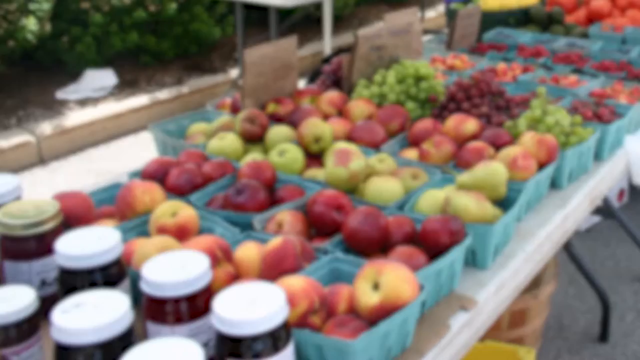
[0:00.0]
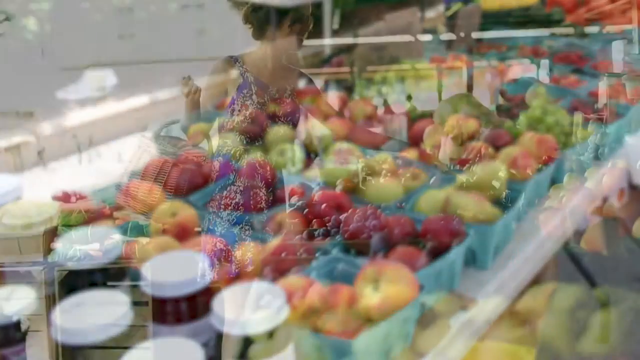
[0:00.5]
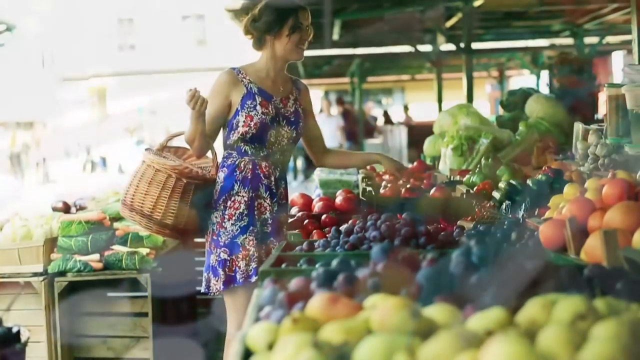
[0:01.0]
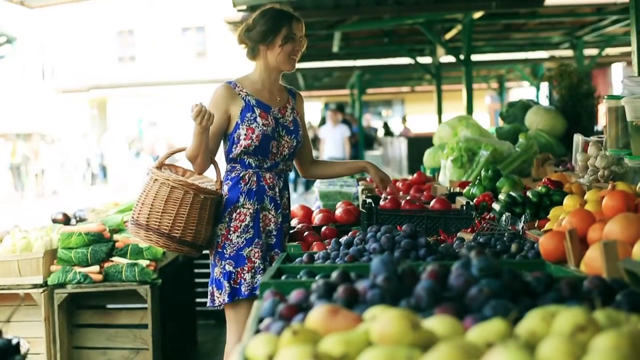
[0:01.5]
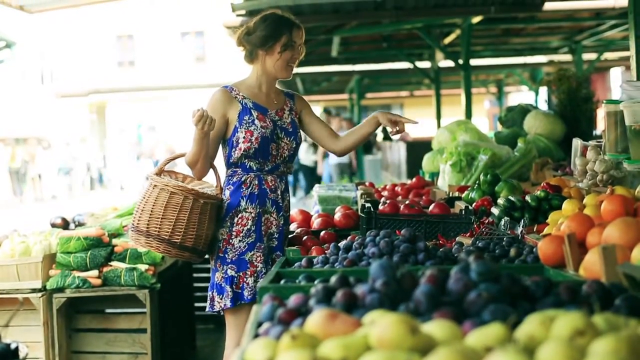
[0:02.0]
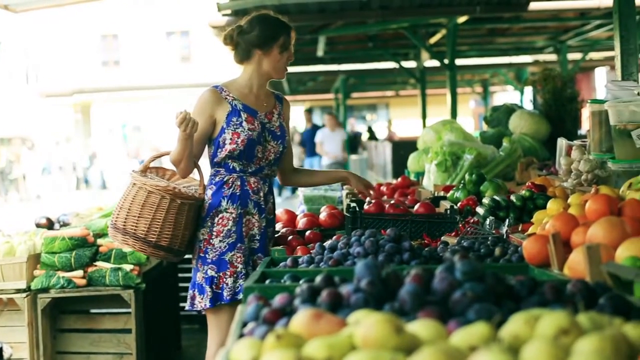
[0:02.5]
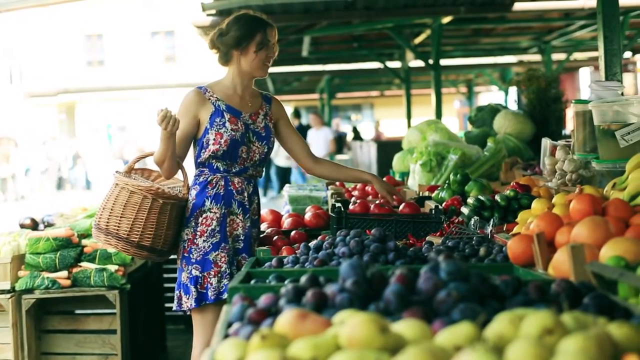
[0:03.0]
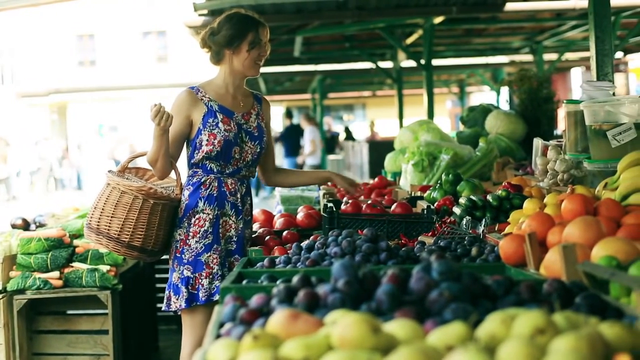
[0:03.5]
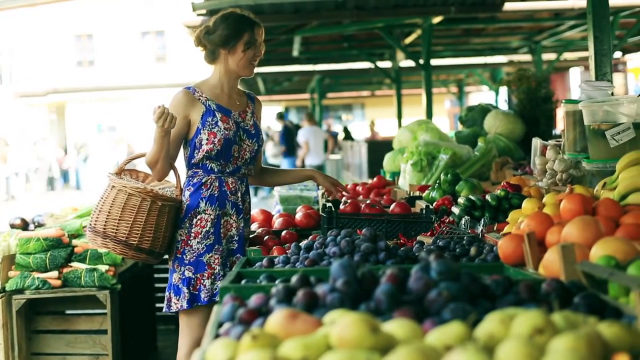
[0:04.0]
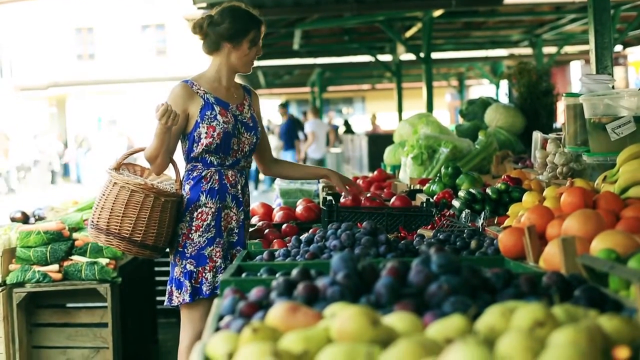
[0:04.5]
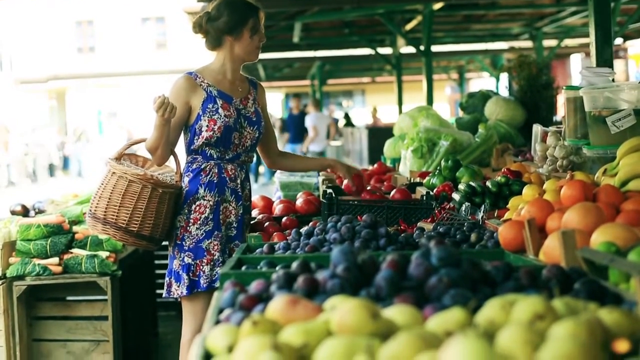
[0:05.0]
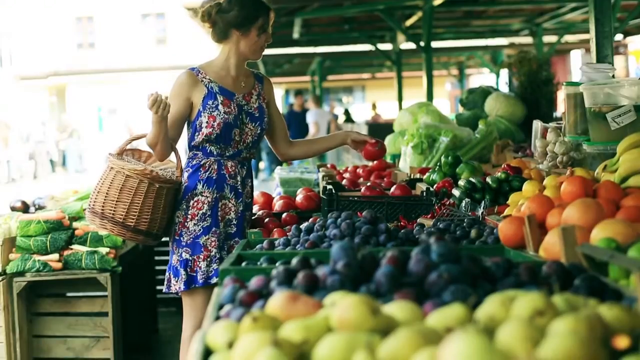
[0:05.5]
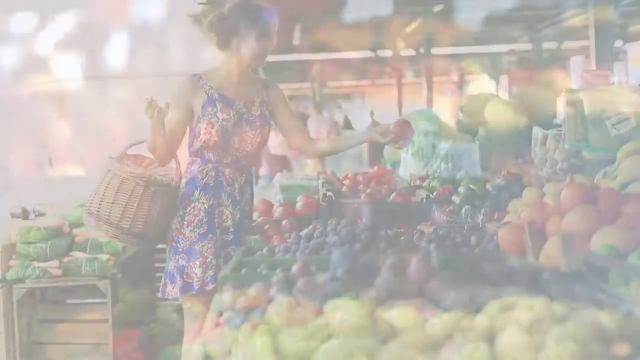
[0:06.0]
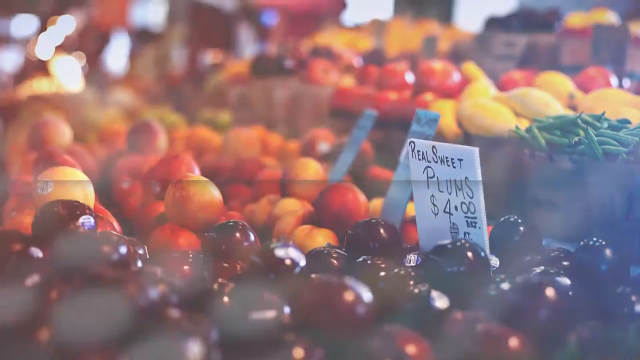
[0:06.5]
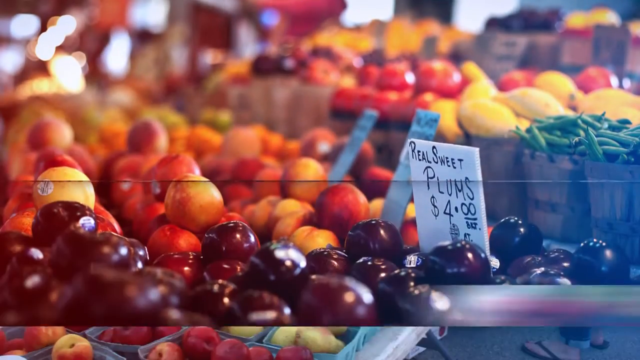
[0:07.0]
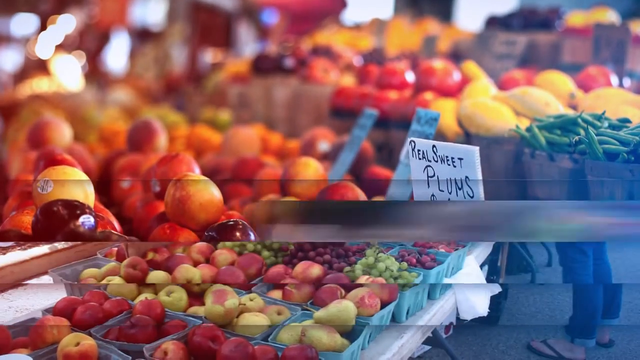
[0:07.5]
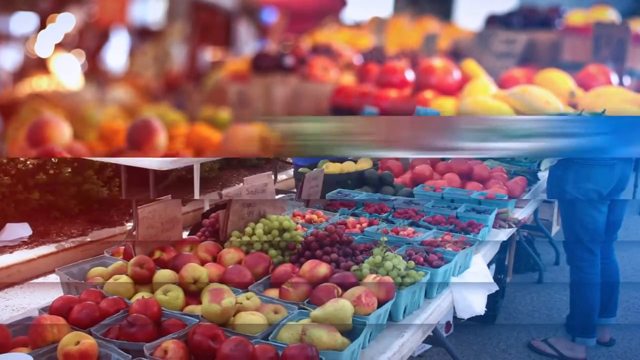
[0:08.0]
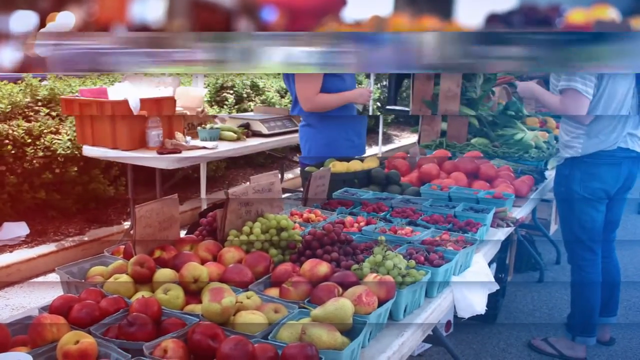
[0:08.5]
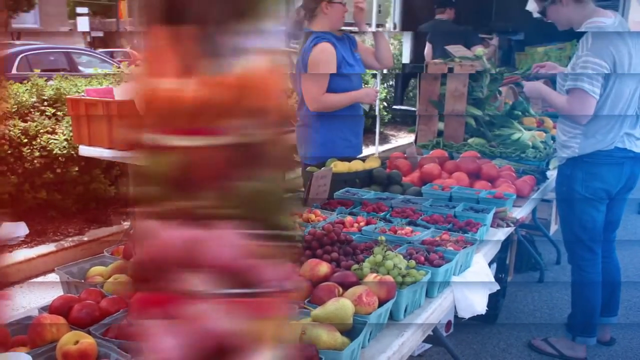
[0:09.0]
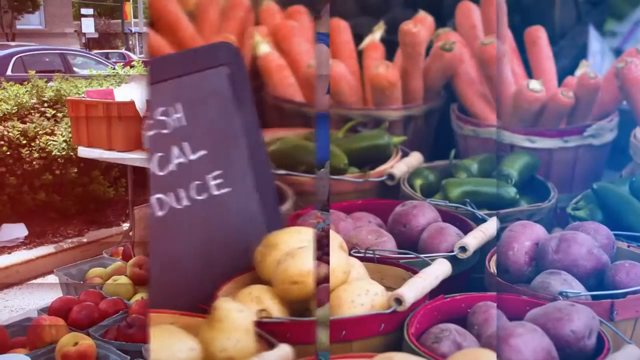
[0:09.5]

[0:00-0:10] In what looks like a market, a lady wearing a red floral dress with a basket in her hand chooses and picks fruits, pointing while talking to the vendor. The scene changes to a shot introducing what they are doing there. Many other people are there doing their purchasing and moving around. The setting is under a shade, with apples, cabbages, lettuce, blueberries, what look like mangoes, bananas and cucumbers. There are also jars with writing that is not clear. A sign reads "real sweet plums, $4 each".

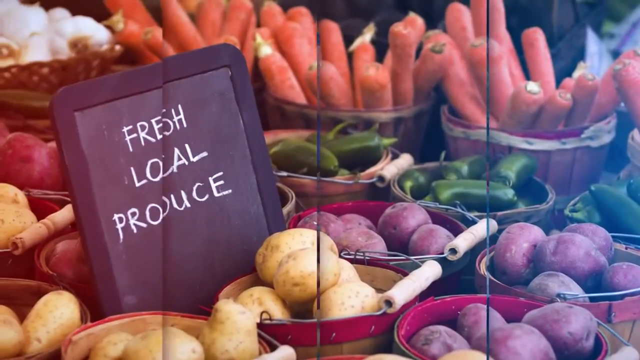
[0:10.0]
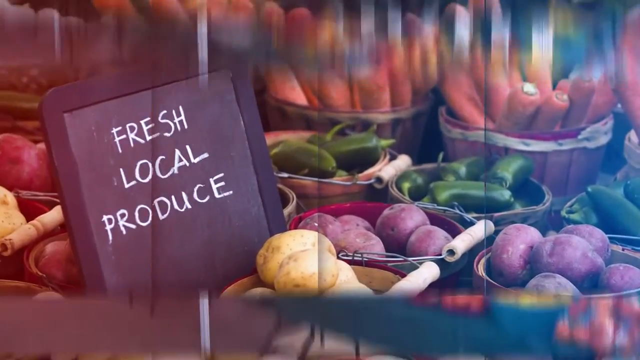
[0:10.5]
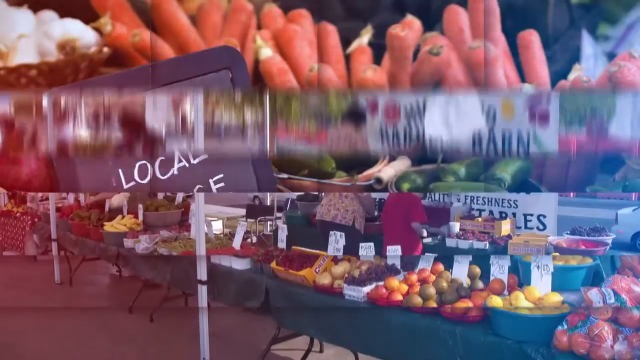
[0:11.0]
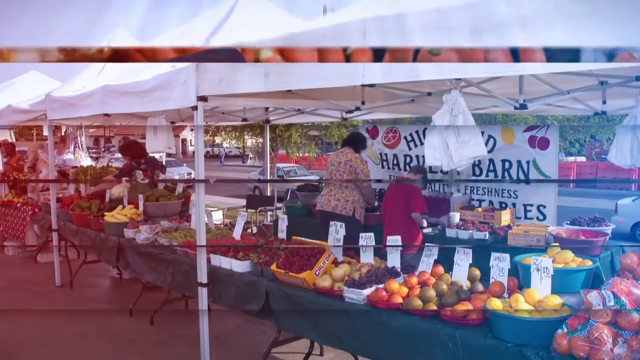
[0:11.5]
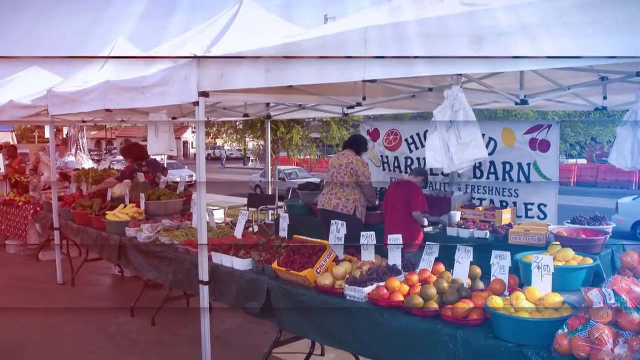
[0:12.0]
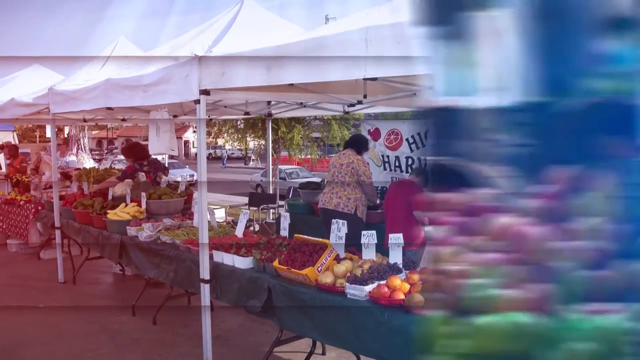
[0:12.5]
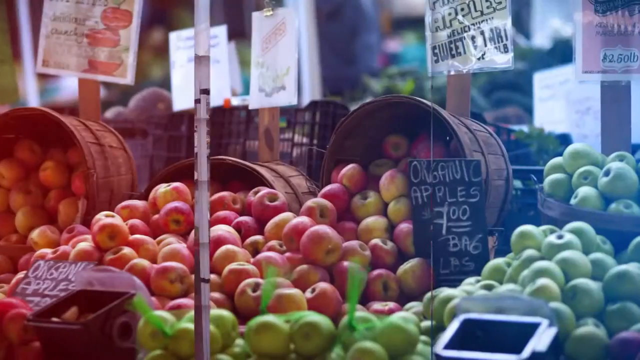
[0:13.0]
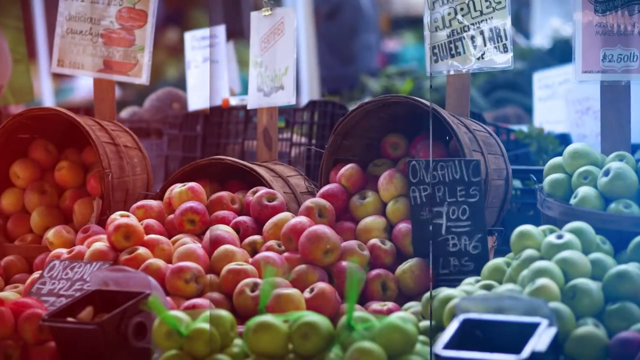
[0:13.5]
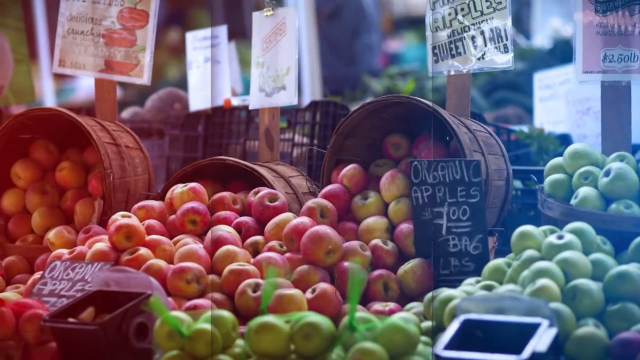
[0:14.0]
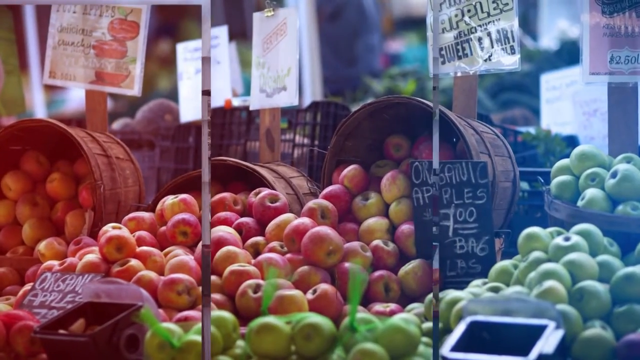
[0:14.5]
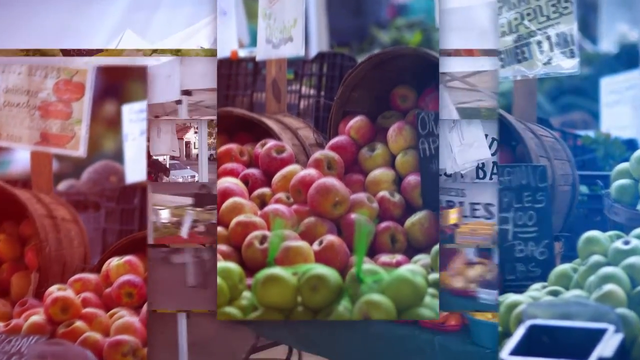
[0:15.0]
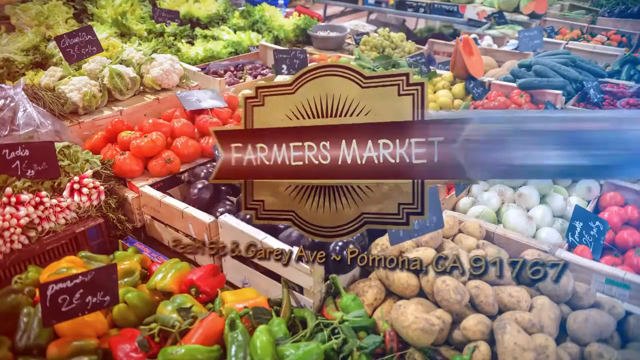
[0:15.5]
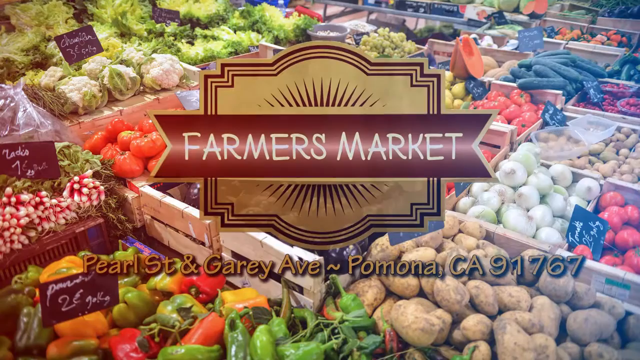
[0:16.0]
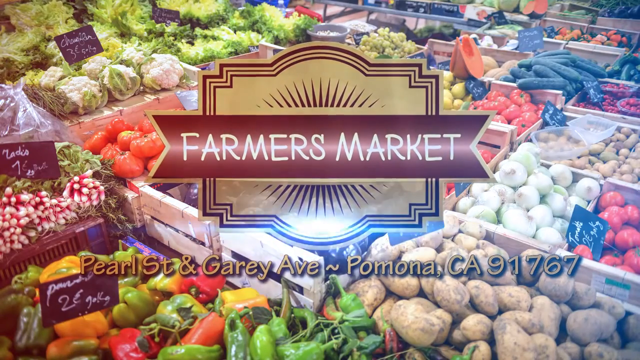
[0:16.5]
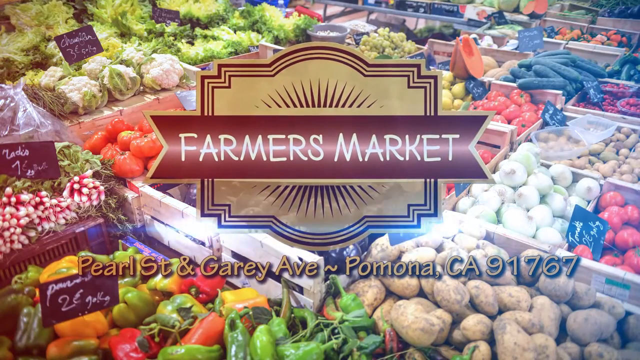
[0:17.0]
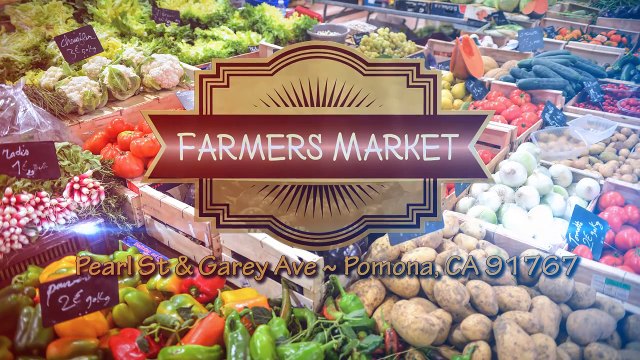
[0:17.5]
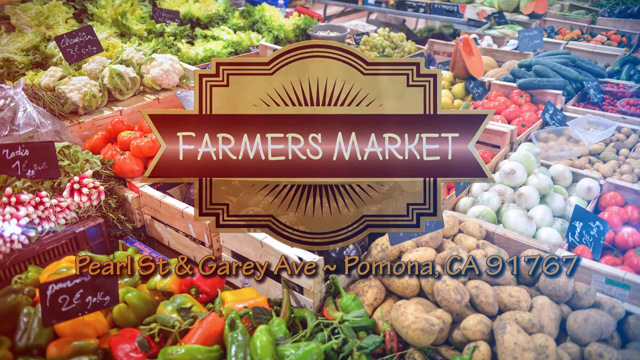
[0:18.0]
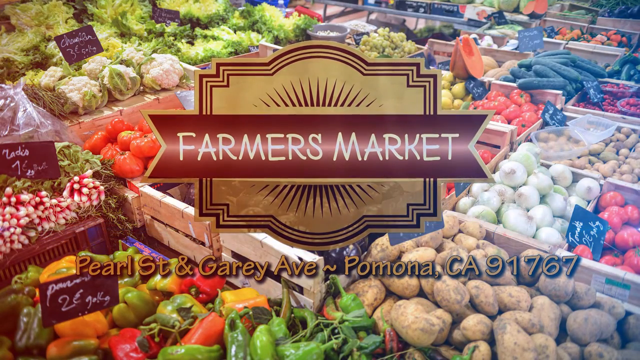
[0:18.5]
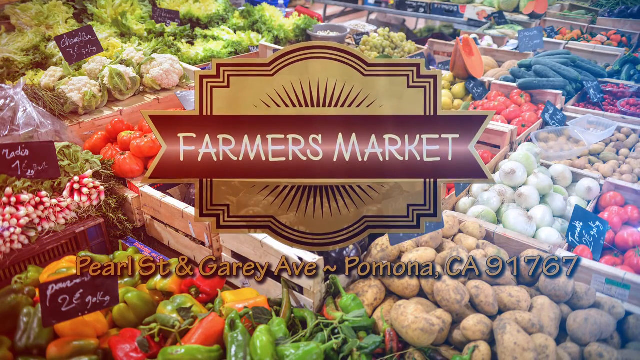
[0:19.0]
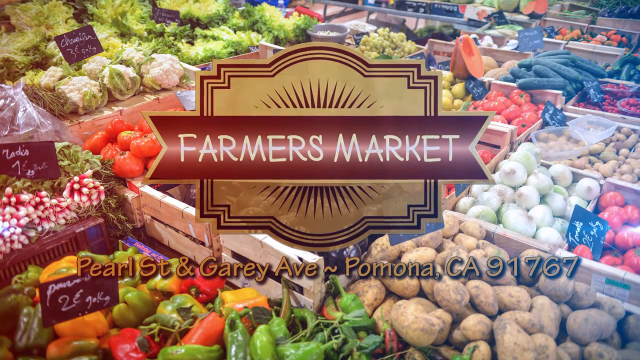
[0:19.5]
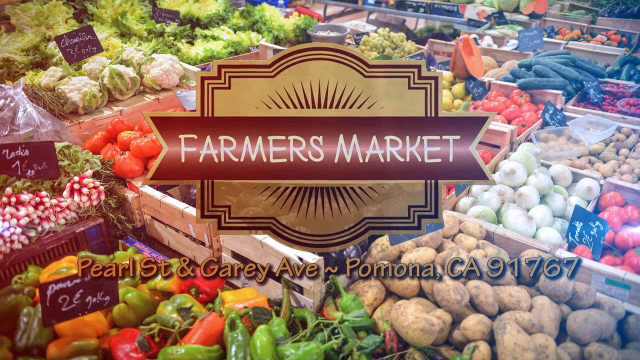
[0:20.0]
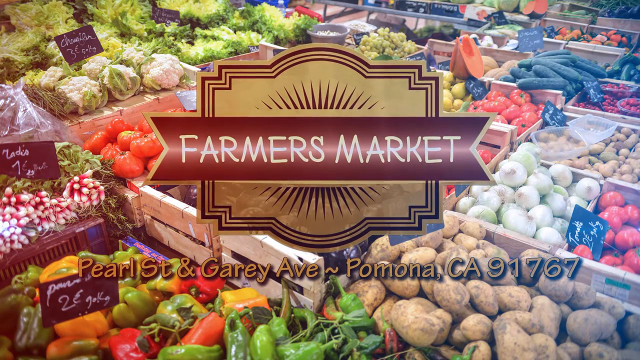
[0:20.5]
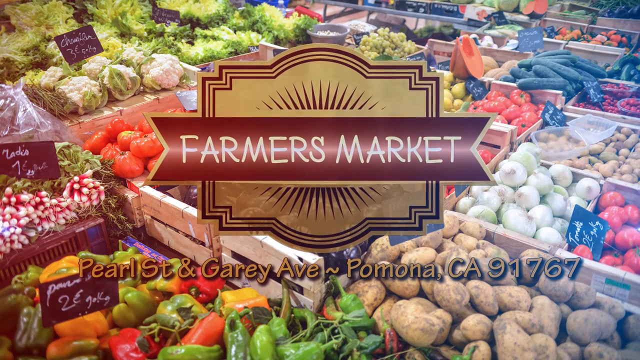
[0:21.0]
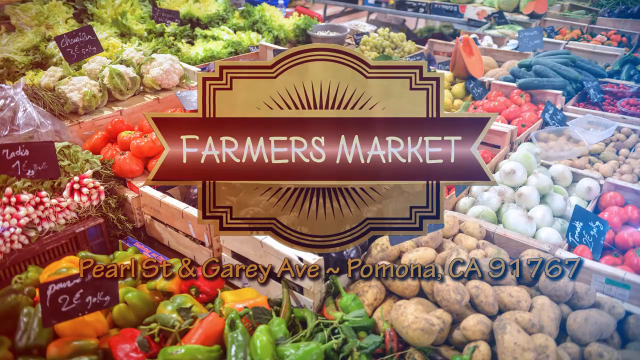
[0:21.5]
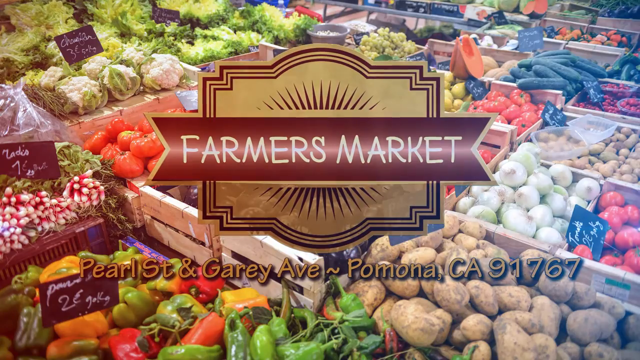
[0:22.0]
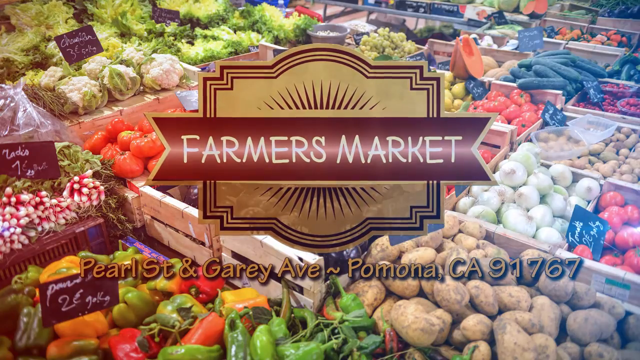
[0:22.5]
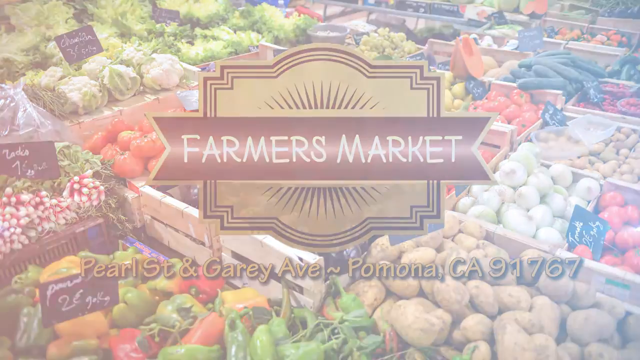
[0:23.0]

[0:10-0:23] A scene shows text that says "fresh local produce", with carrots, potatoes and sweet potatoes placed in what look like buckets. The scene changes to another place where "harvest barn" is written, along with text including the words "freshness" and "staples" that is not fully visible. Price tags are on top of the fruits, including "organic apples, $7 a bag". There are what look like peaches, and apples of different colors, red and green. Then text says "farmer's market", and the market is at Pearl Street, Gary Avenue, Pomona, CA 91767.